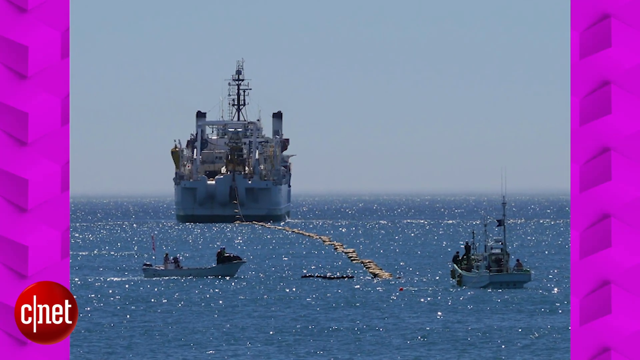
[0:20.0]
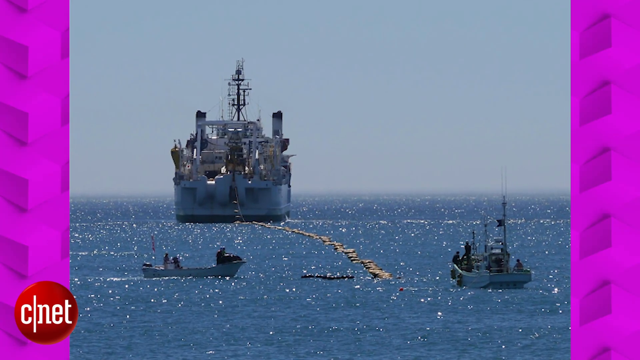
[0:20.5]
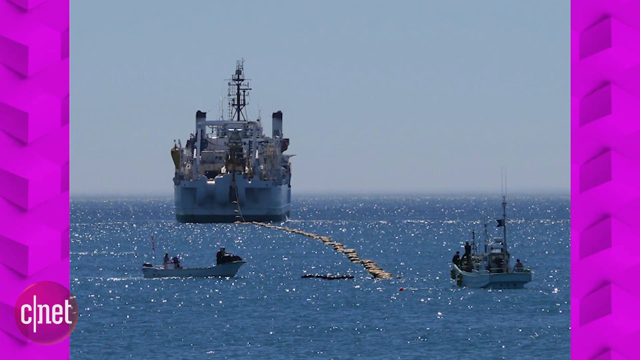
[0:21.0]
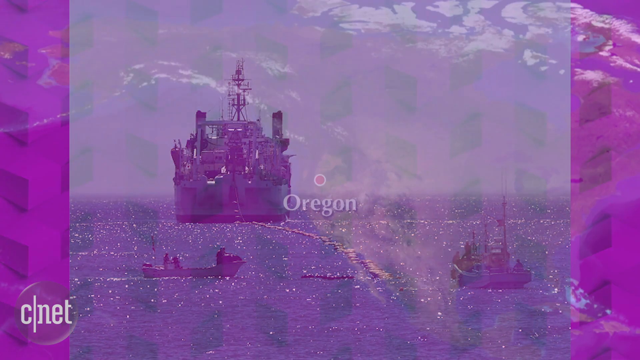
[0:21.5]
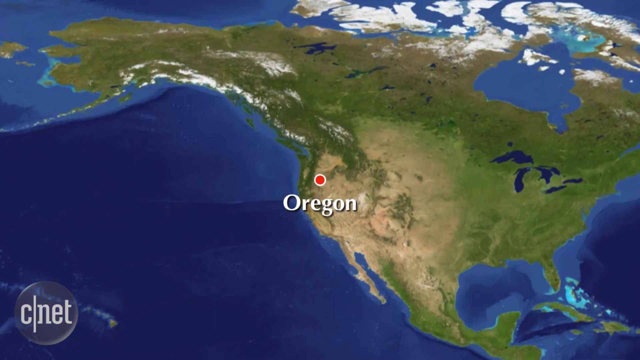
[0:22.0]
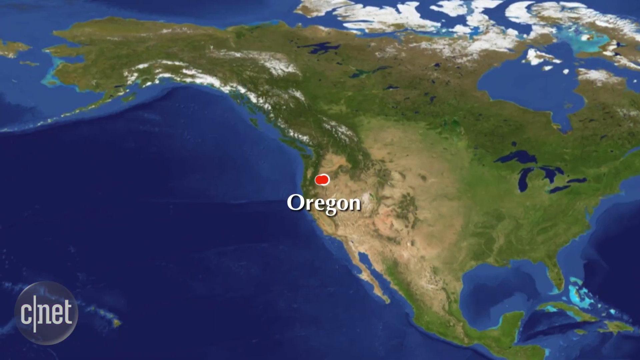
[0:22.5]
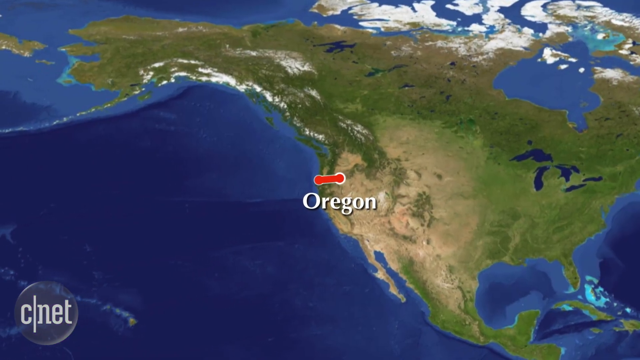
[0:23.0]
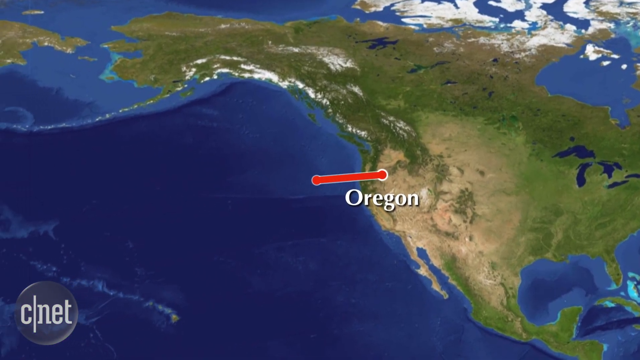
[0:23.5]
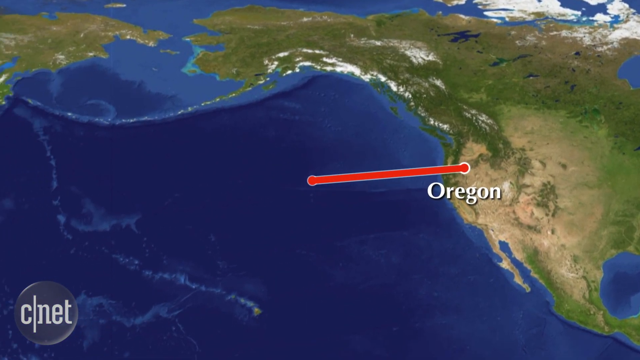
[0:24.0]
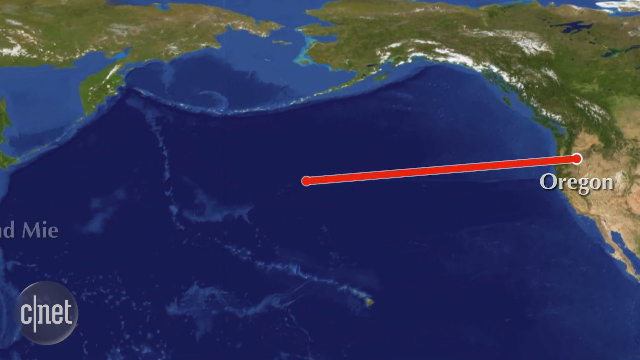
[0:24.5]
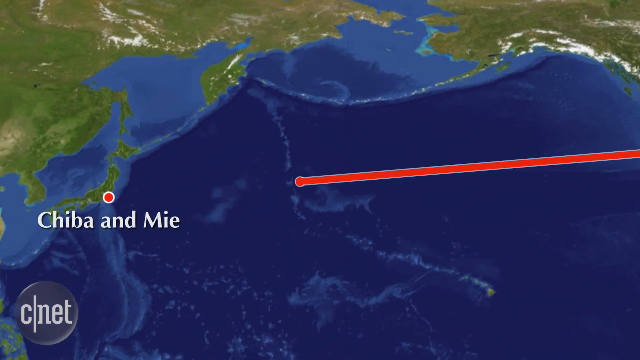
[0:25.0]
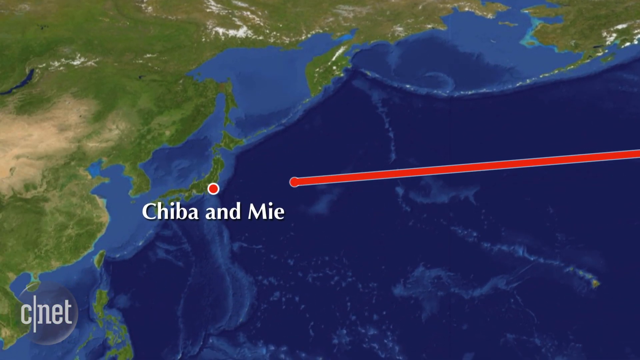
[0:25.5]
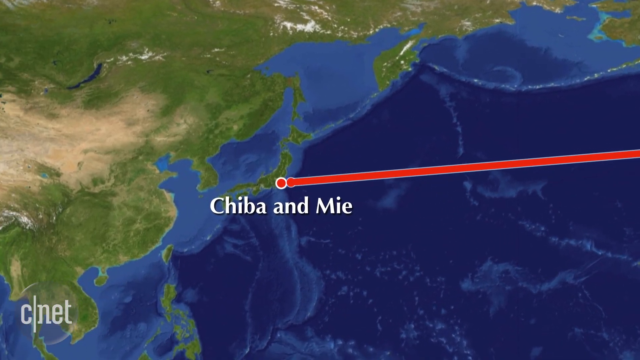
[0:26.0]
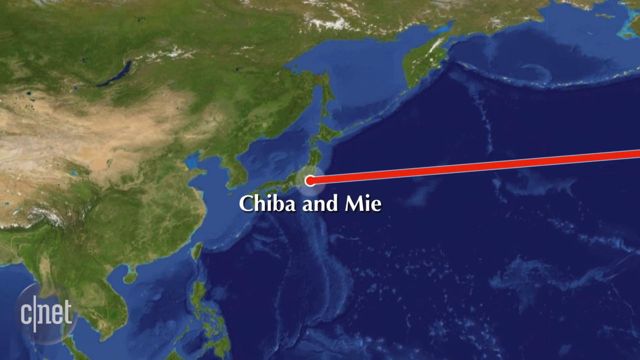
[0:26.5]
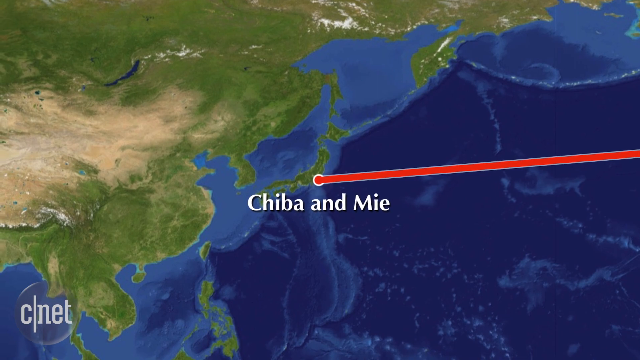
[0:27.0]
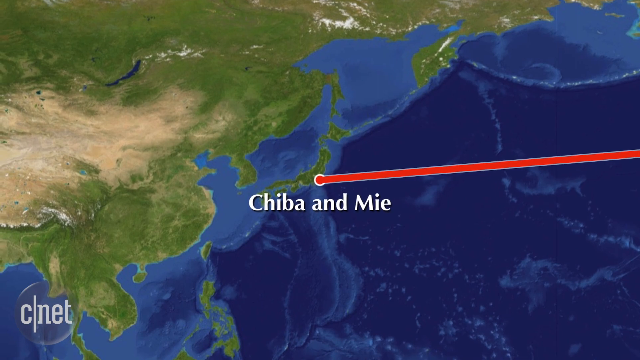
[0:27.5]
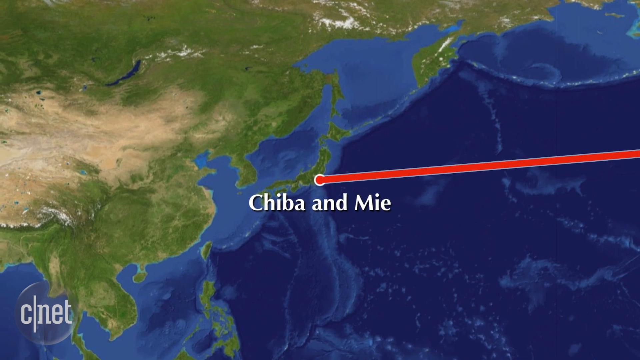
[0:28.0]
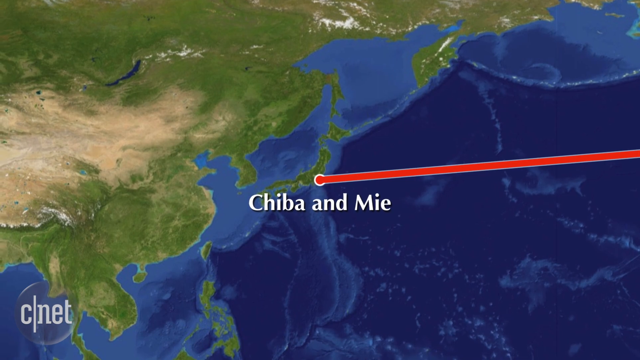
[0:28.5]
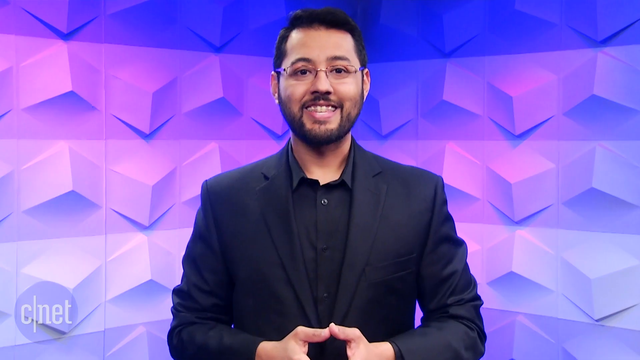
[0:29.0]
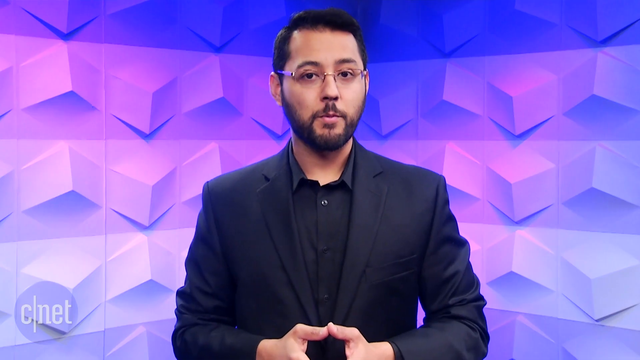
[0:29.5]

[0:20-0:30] A picture shows the outline of an ocean, with small boats and a big ship in the background and small pieces of objects all over the sea. The camera captures details of the sea. The view then shifts to a map with a red line drawn from a region labeled Oregon extending to Chiba and Mie, apparently showing the extent of the cables. The video then returns to the man in the studio, who appears focused as he speaks, with movement visible in his mouth and head.